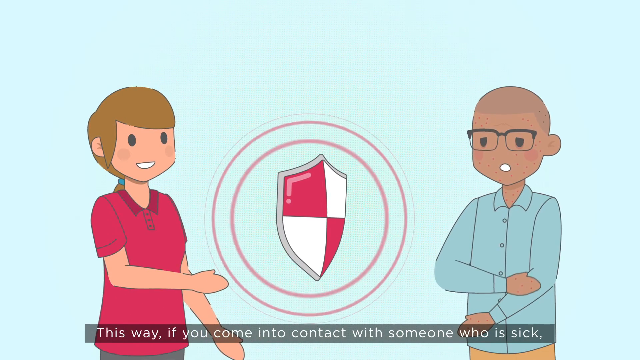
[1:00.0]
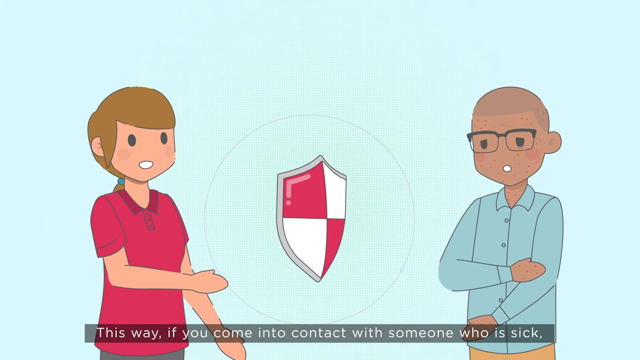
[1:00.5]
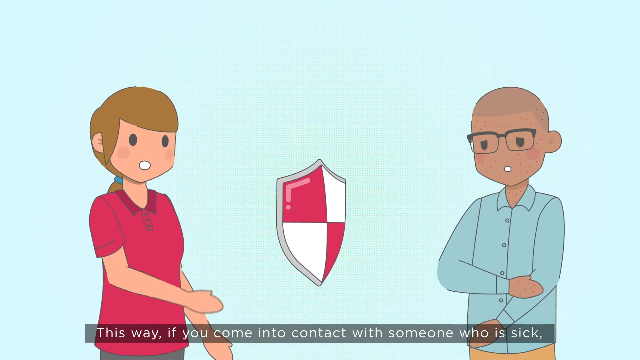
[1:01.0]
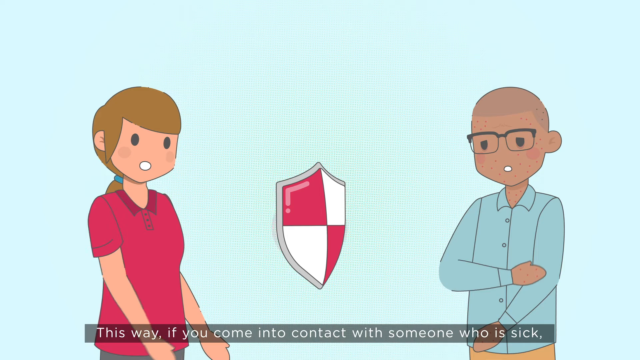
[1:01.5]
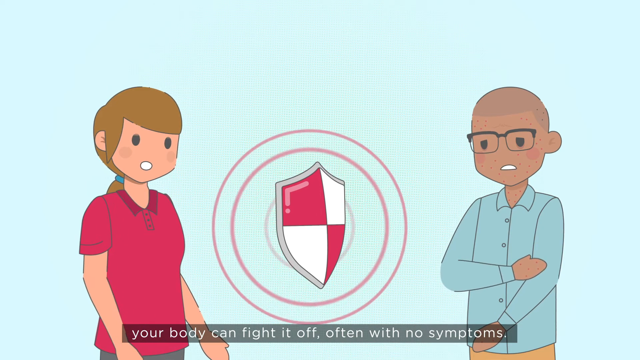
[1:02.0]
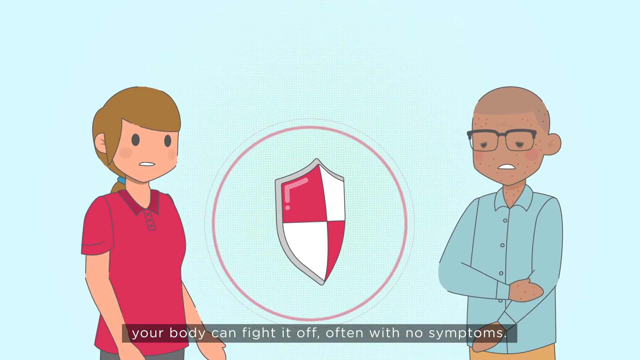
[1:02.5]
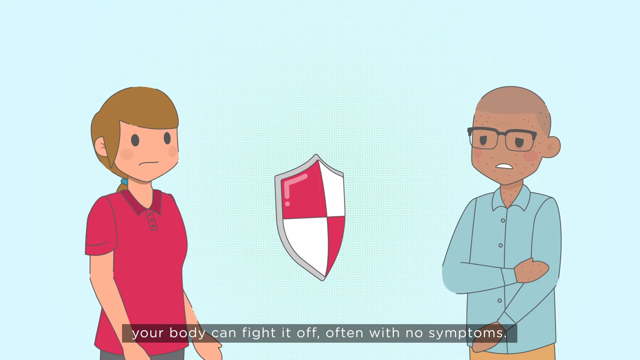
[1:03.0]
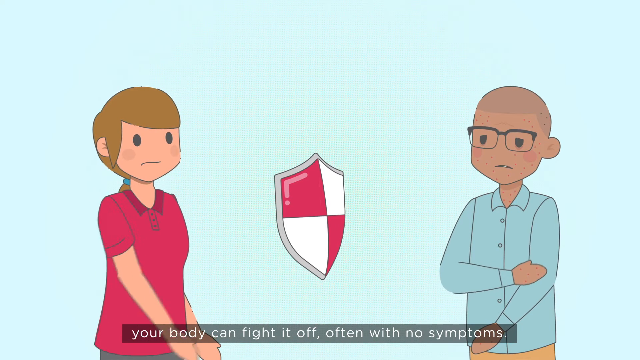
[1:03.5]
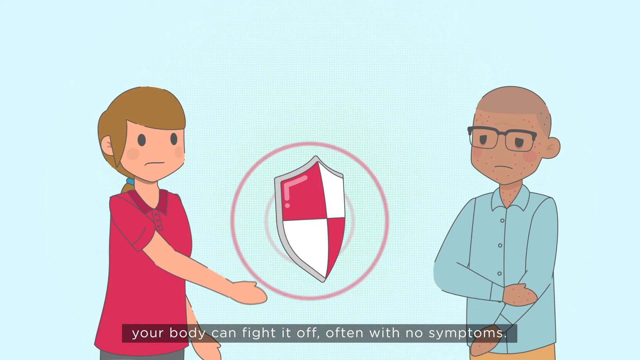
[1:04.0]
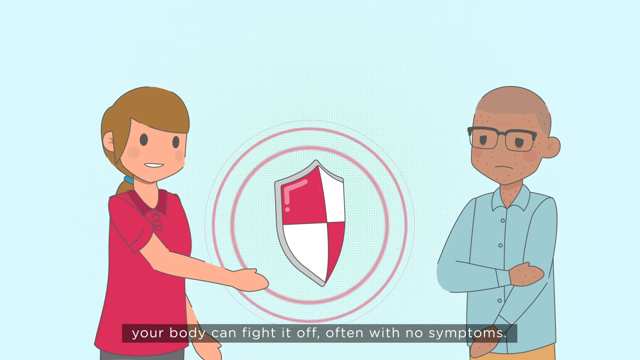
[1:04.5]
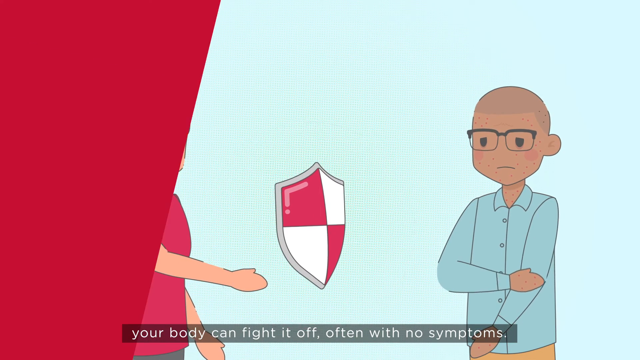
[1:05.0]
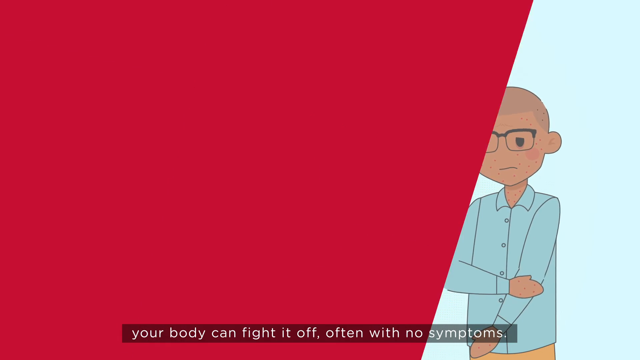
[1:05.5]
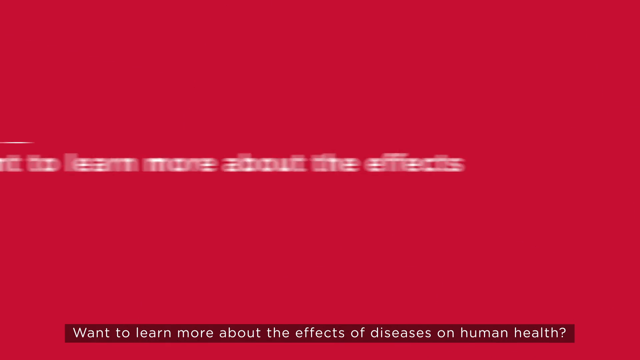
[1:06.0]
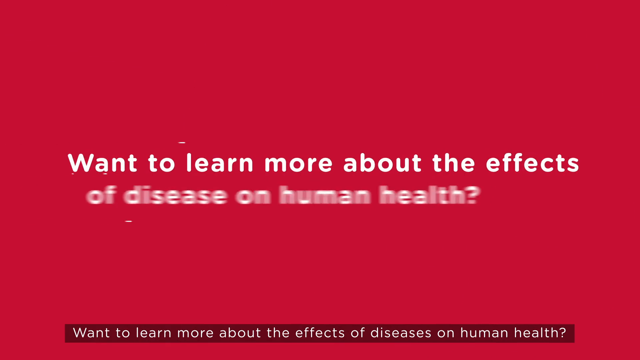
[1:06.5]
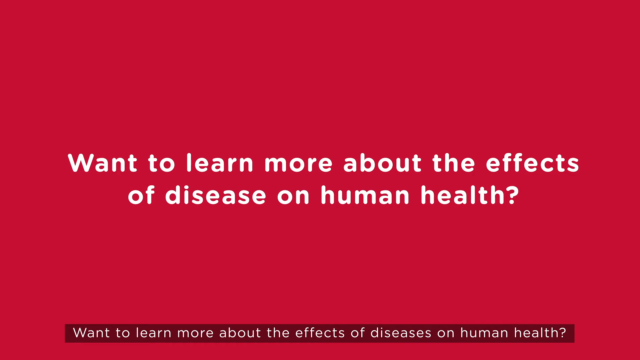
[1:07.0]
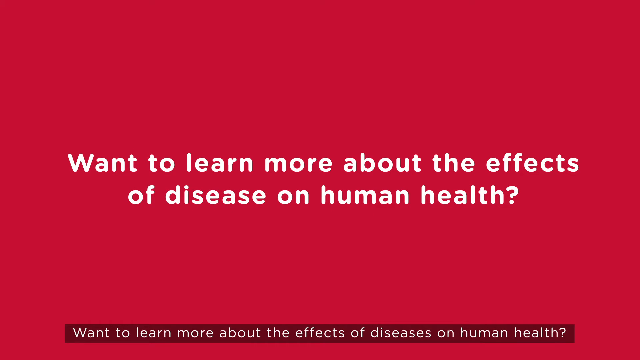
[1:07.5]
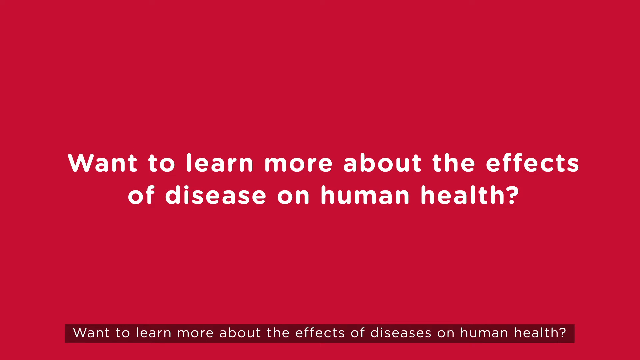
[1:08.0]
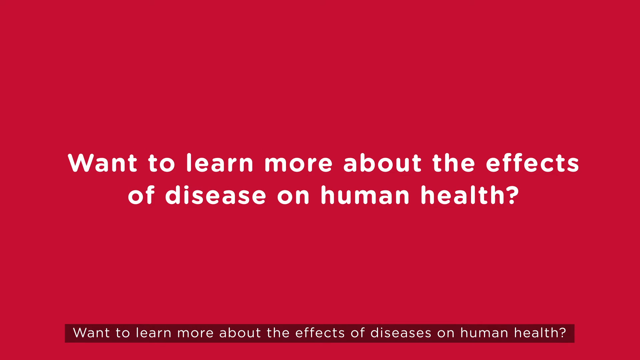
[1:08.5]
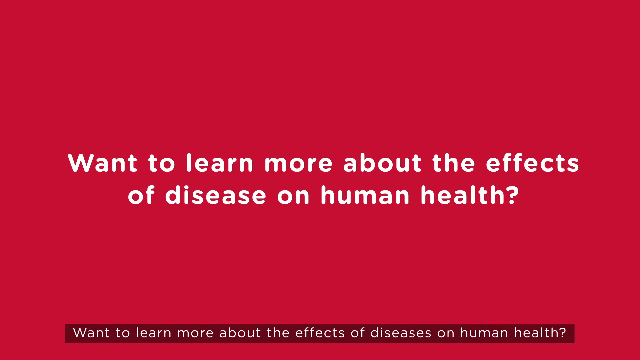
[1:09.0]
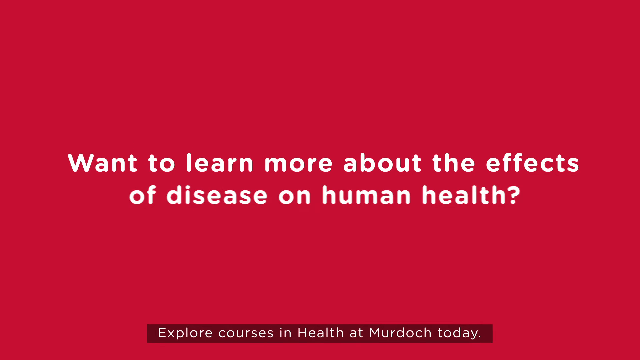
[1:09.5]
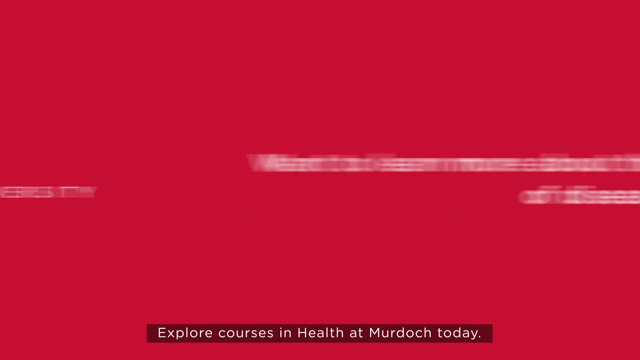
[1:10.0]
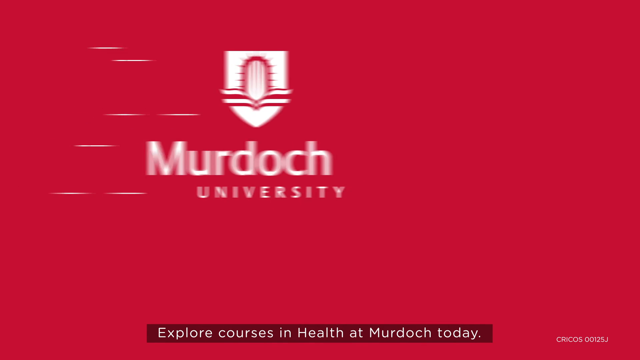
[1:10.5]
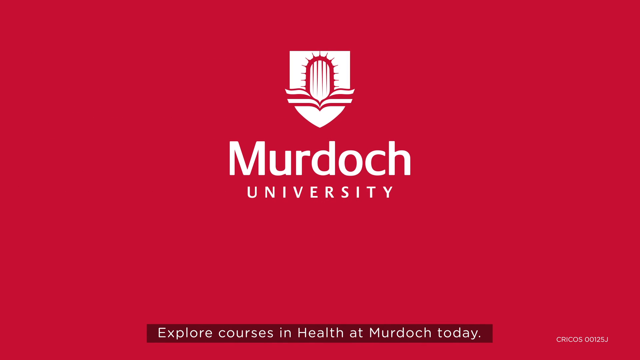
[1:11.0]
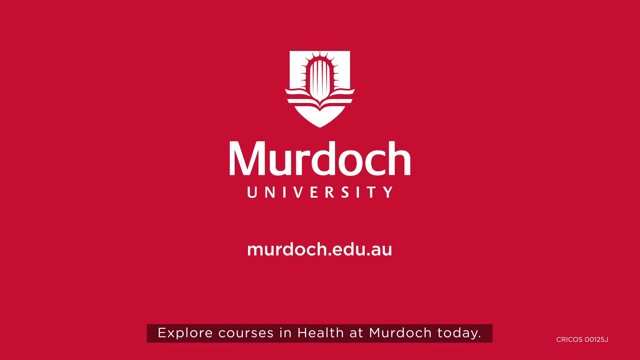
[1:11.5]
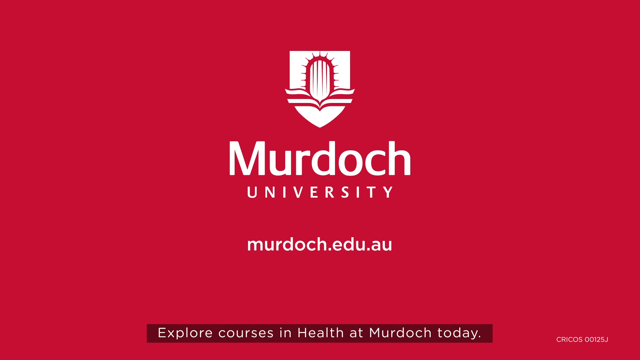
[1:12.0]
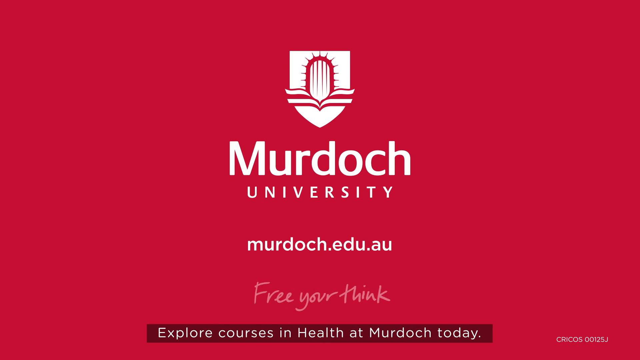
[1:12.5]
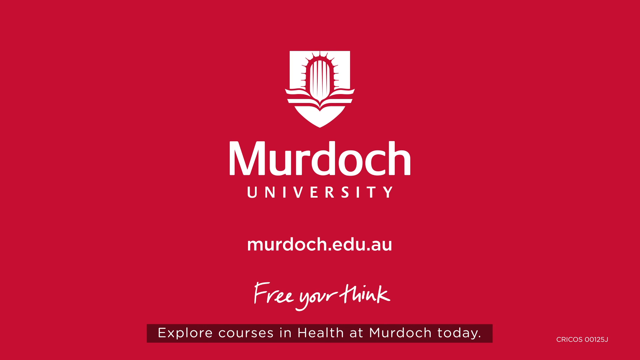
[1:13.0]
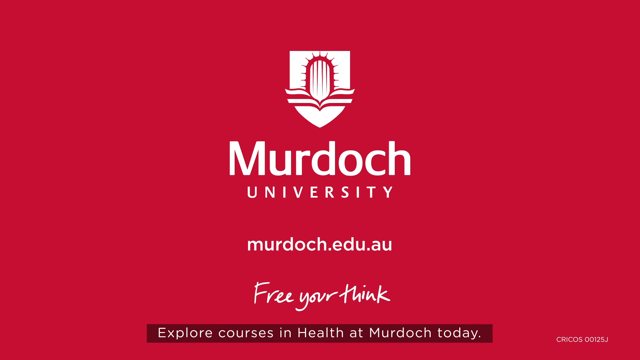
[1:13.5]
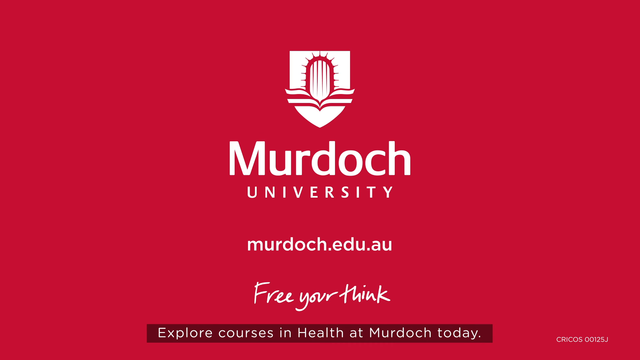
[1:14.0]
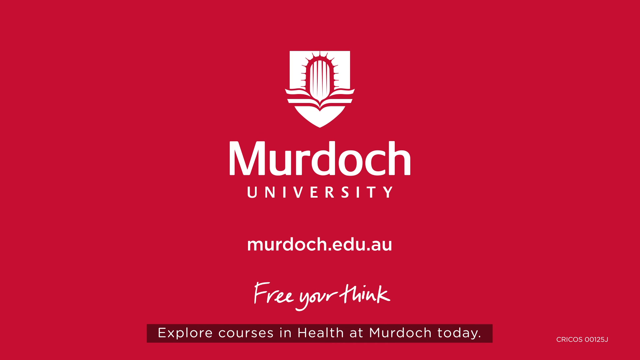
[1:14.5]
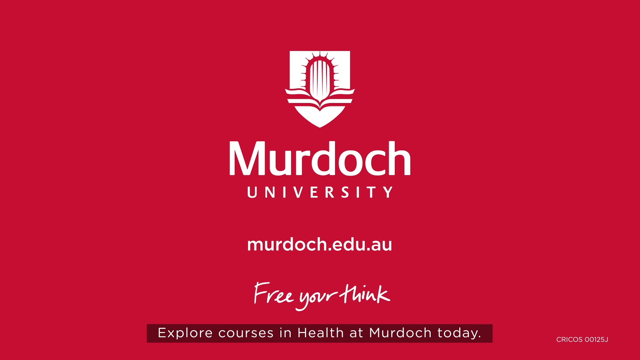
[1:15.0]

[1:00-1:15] Two animated figures appear on a blue background. On the left is a female figure in a red shirt with brown hair in a ponytail. On the right is a male figure with brown skin, little to no hair, black glasses, and a blue long-sleeved button-up top. Between them is a small shield checkered in red and white. The man rubs his arm as if it is sore, and little red circles vibrate out from the shield. The woman extends her hand toward the man, and the animation stops. The screen changes to a red background with white writing across it reading "want to learn more about the effects of disease on human health". The red screen then shows "Murdoch University, murdoch.edu.au", with scribble-style writing at the bottom reading "free your think", and the Murdoch University logo at the top: a white crest with a red spiky oval in the center and red lines coming down from it. This last part apparently relates to someone getting vaccinated.